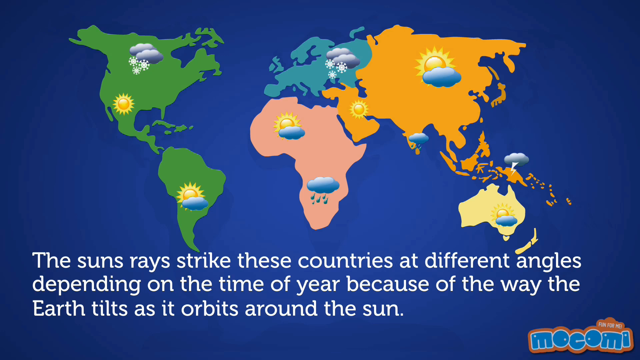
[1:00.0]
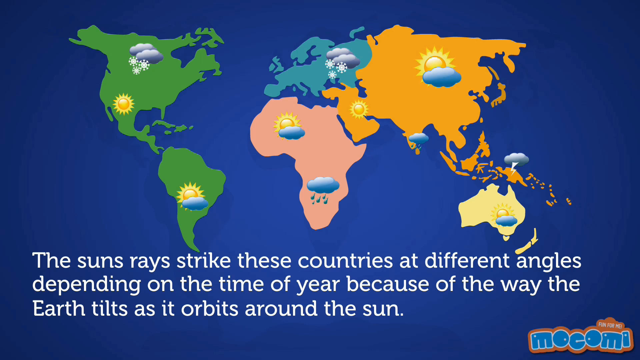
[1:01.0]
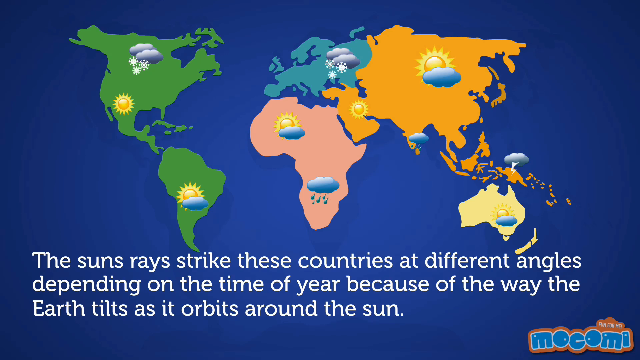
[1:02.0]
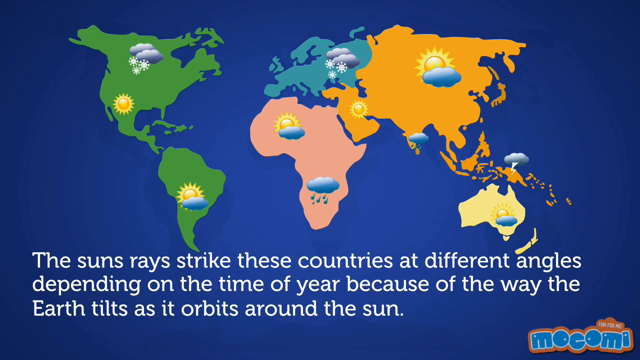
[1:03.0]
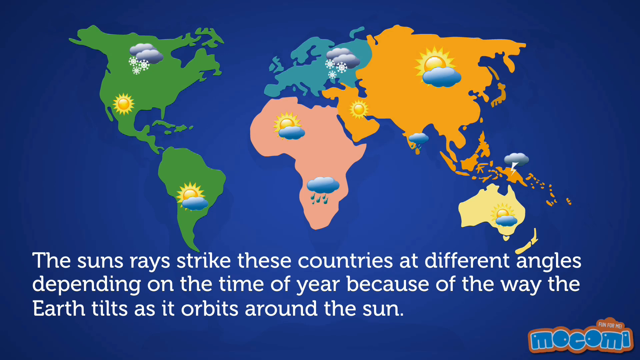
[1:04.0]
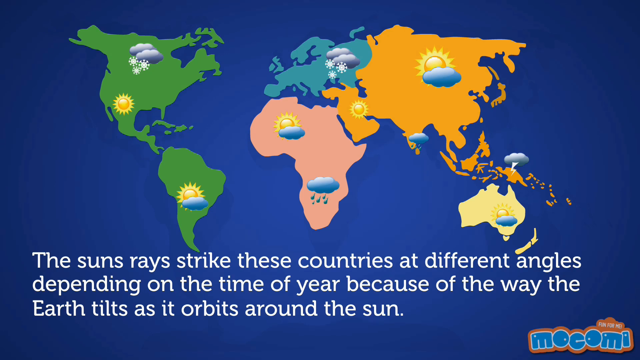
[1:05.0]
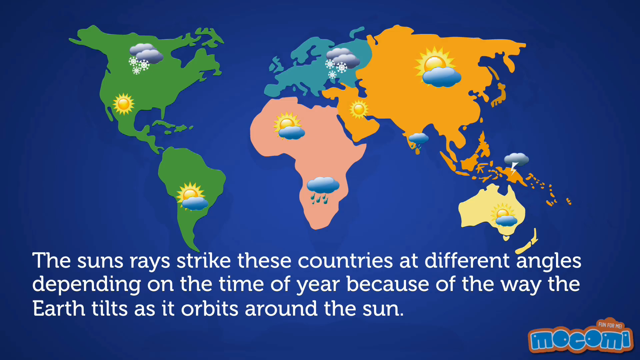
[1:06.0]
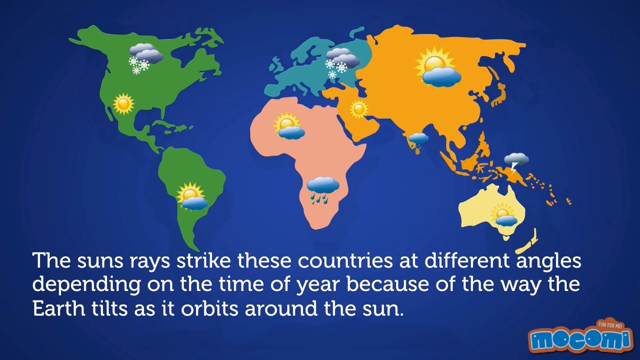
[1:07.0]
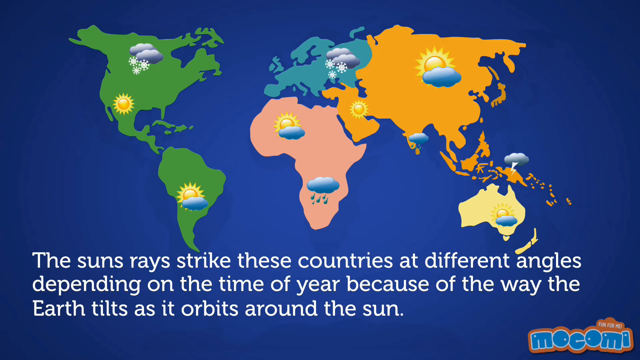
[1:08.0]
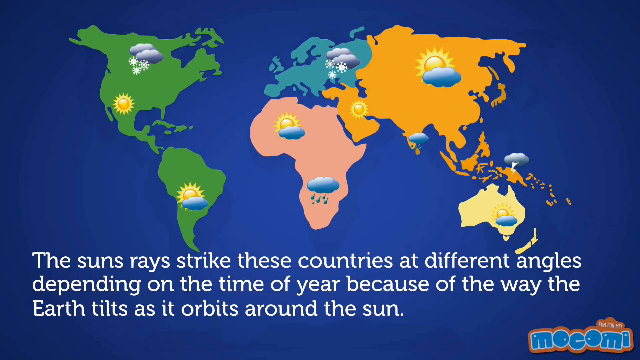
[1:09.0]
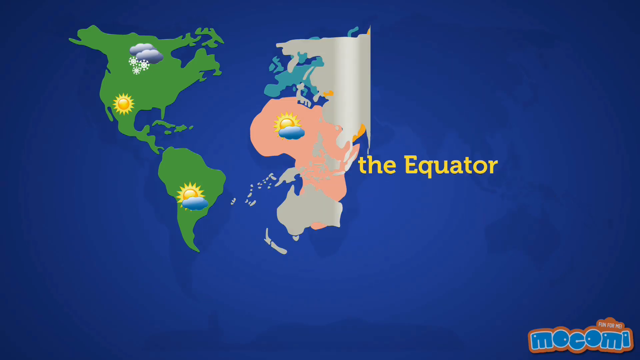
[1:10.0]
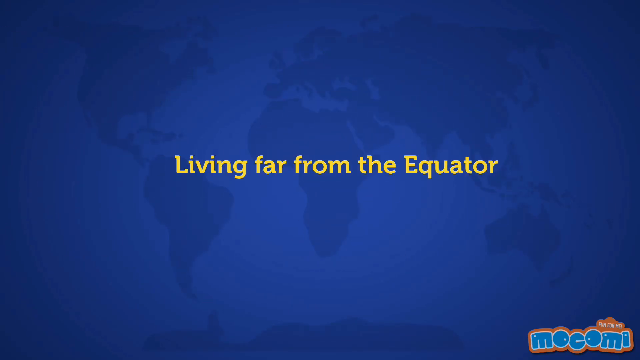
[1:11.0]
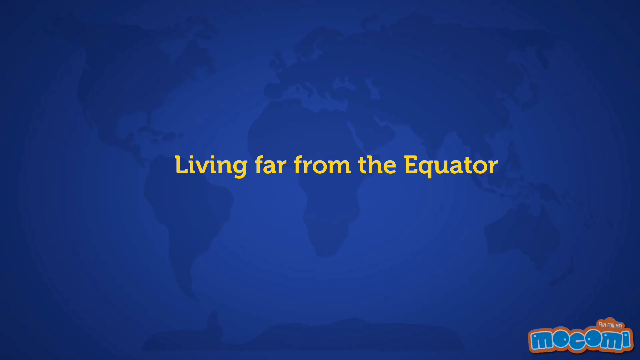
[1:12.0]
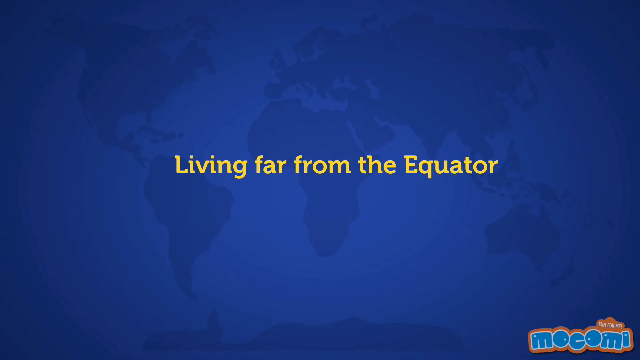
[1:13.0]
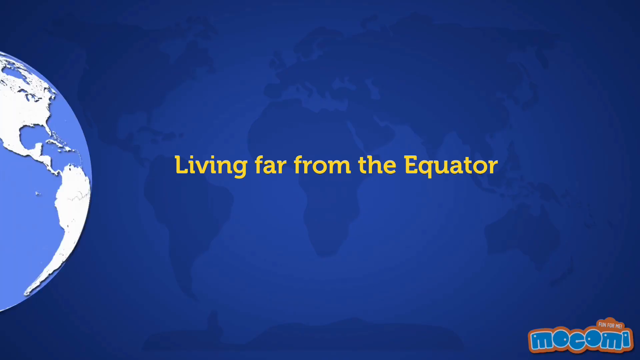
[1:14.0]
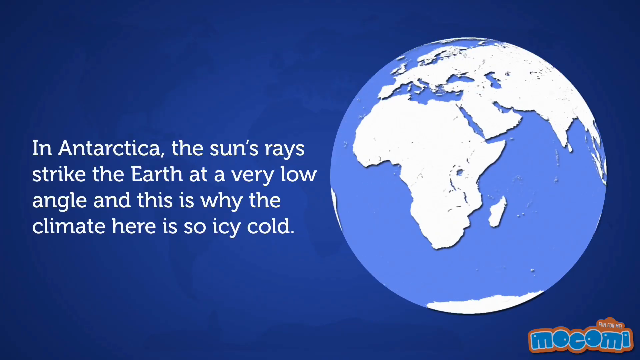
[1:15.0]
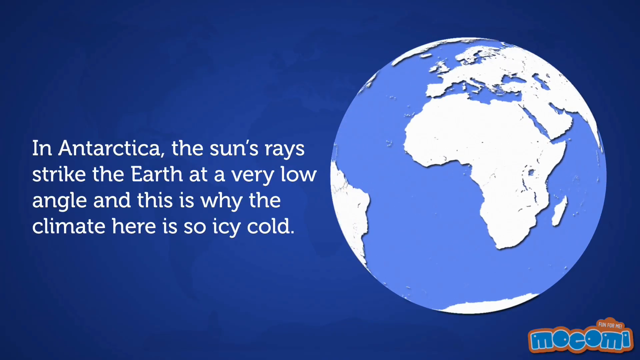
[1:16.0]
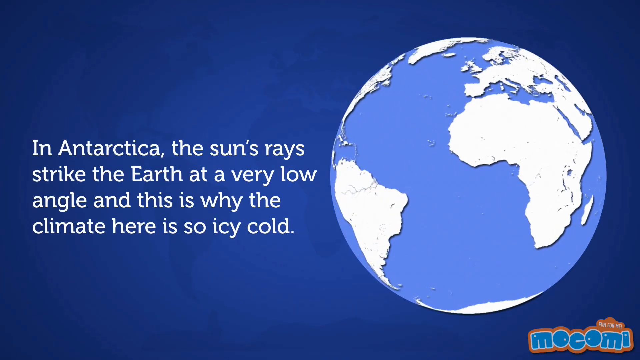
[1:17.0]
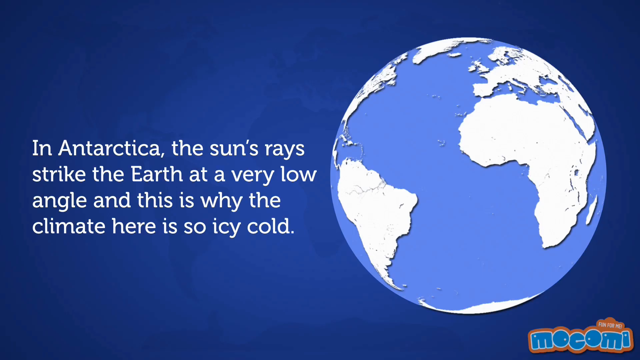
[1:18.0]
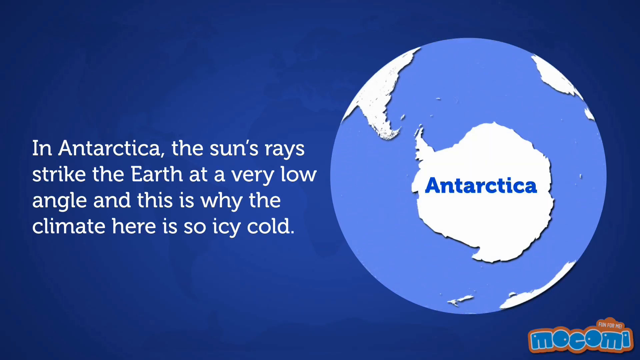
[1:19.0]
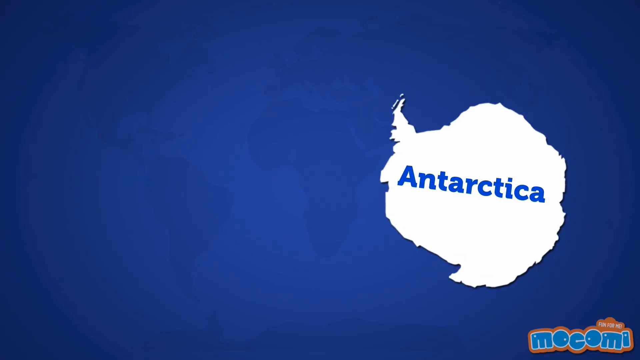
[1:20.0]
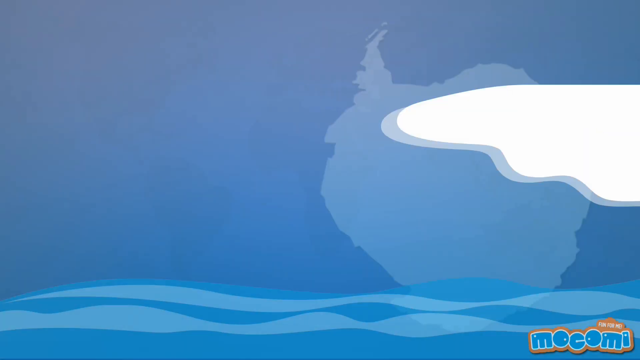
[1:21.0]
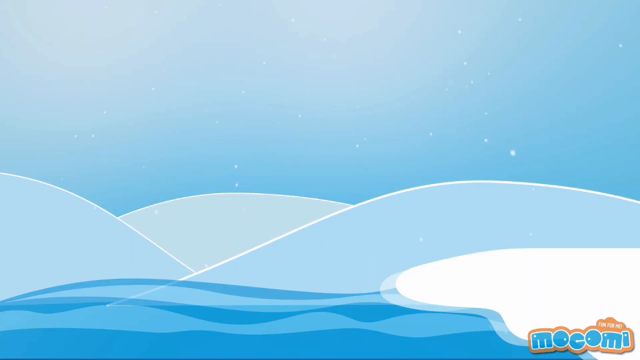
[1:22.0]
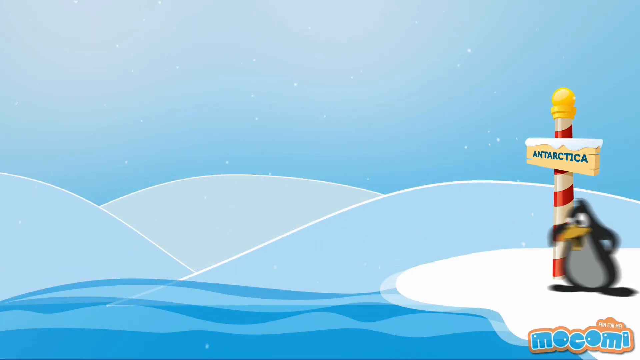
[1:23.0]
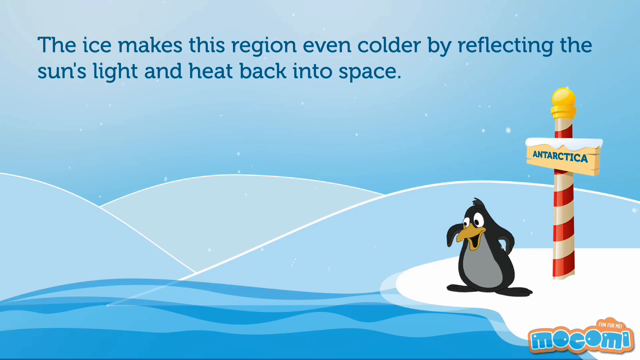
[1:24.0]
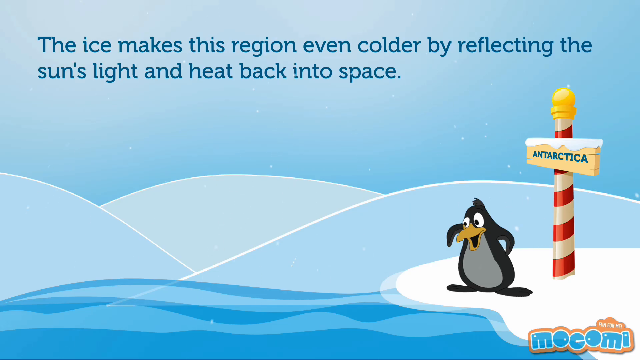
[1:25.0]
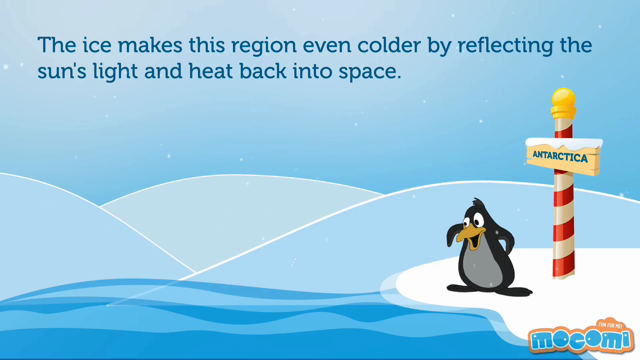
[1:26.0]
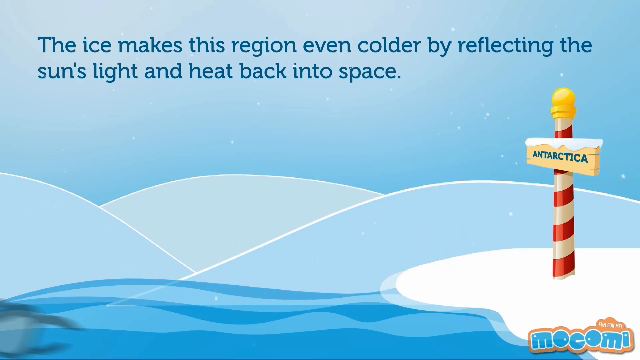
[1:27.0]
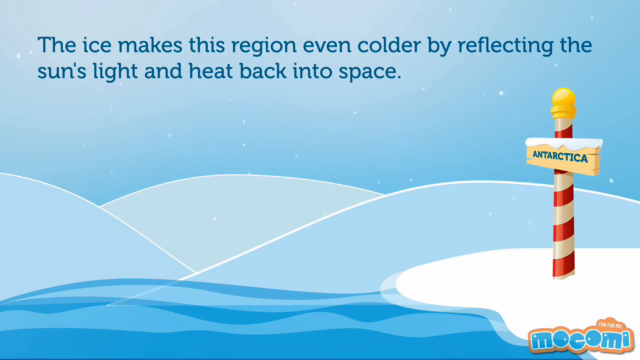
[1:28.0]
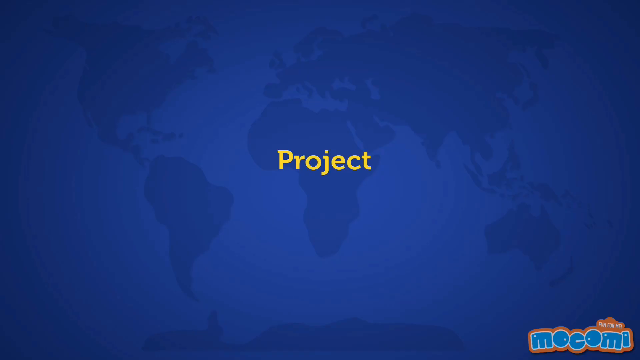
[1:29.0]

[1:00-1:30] Elementary-style weather icons show how hot or cold it is, or what type of weather there is, in each area. The globe then changes to a blue and white map of Antarctica, with a cute little penguin next to a sign that says "Antarctica". At the end, the word "project" appears.